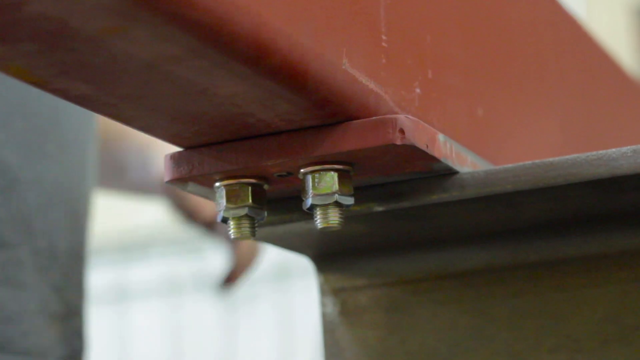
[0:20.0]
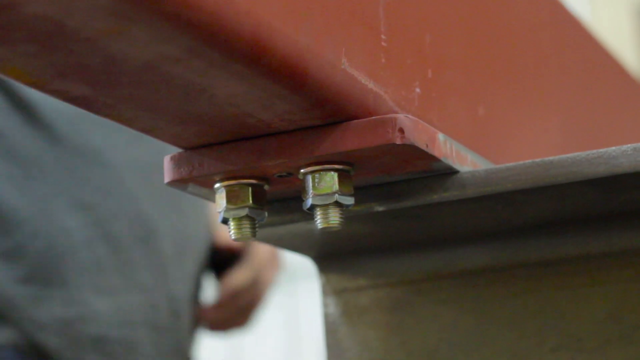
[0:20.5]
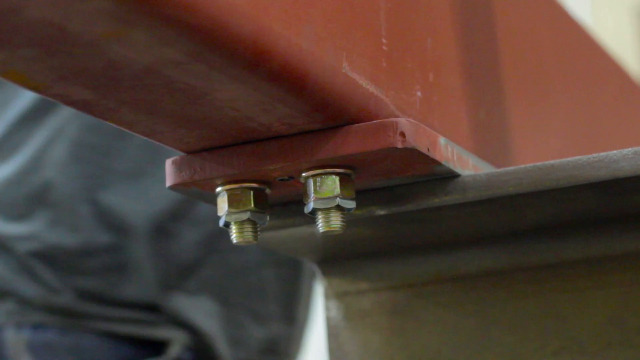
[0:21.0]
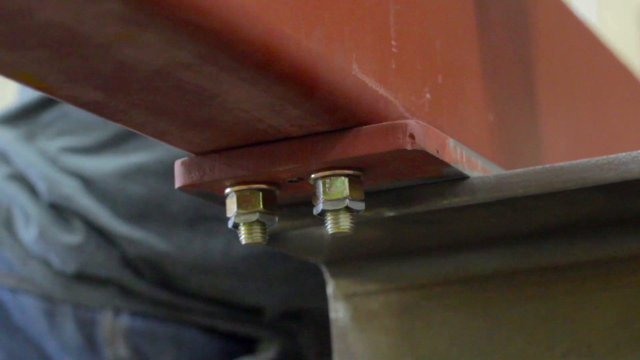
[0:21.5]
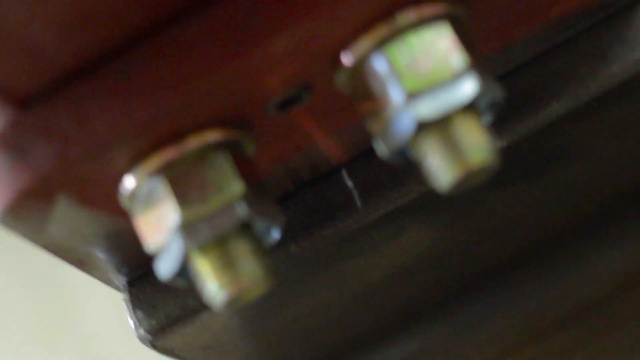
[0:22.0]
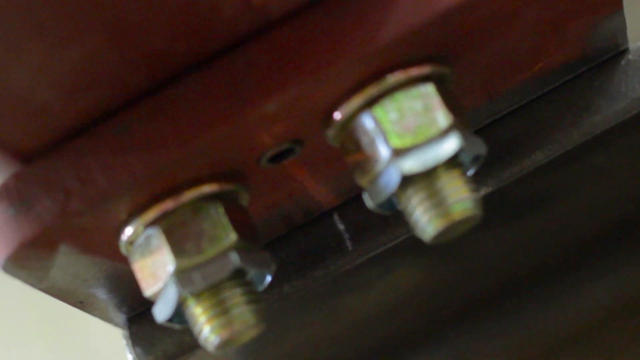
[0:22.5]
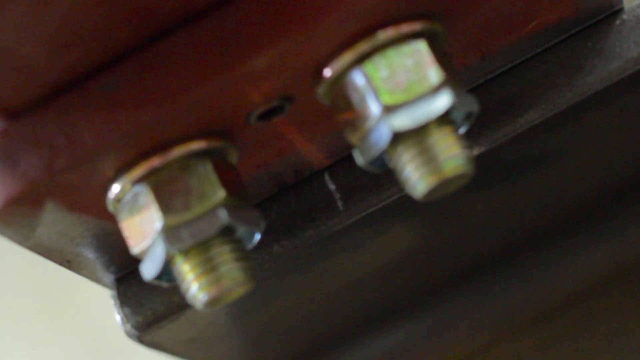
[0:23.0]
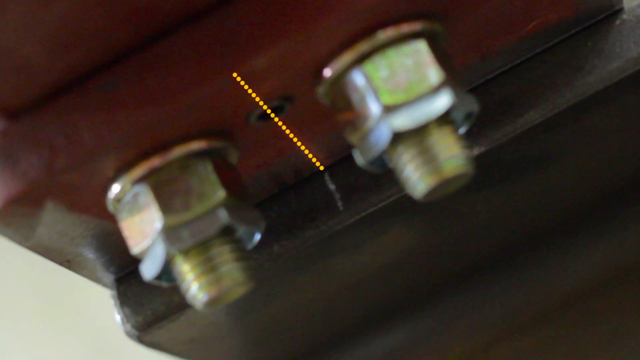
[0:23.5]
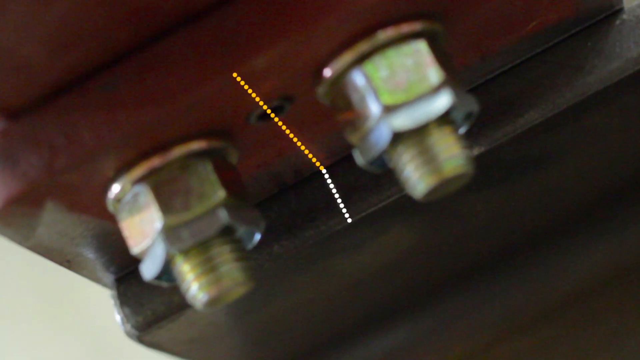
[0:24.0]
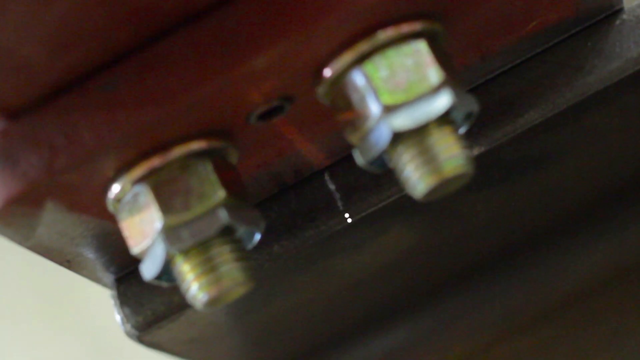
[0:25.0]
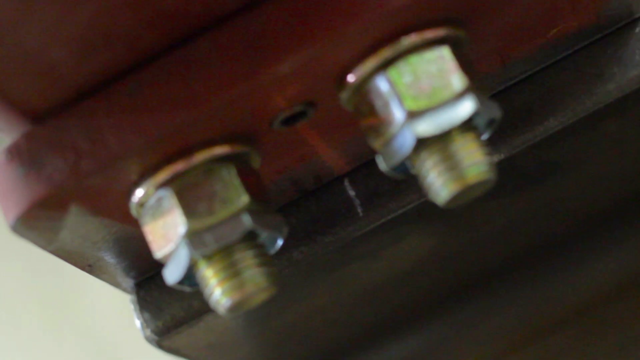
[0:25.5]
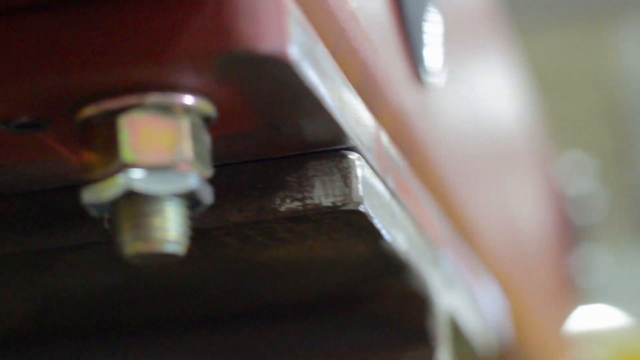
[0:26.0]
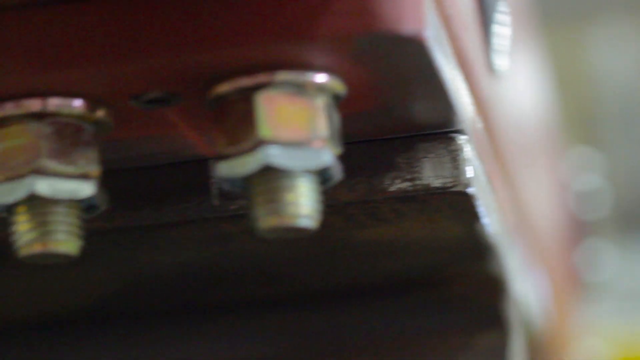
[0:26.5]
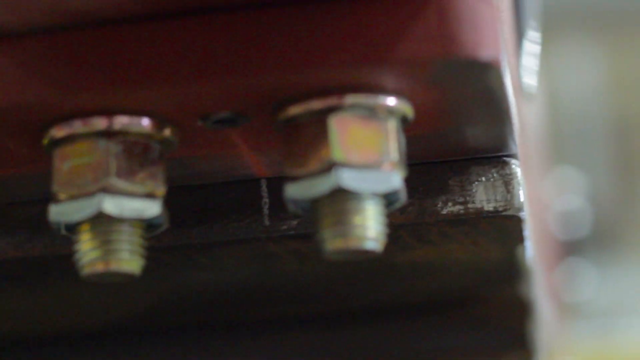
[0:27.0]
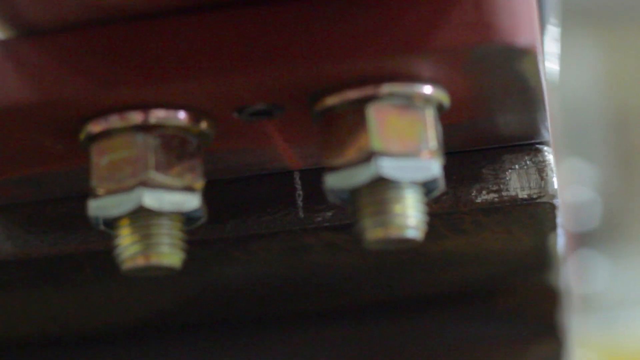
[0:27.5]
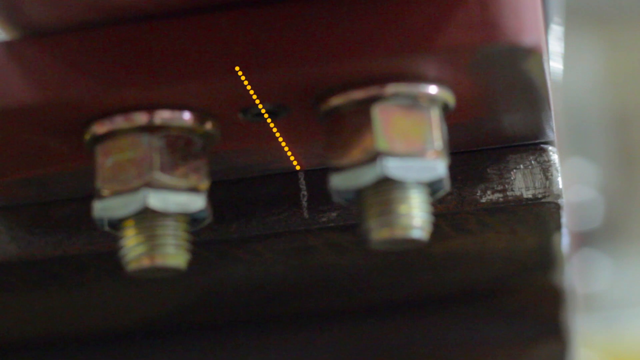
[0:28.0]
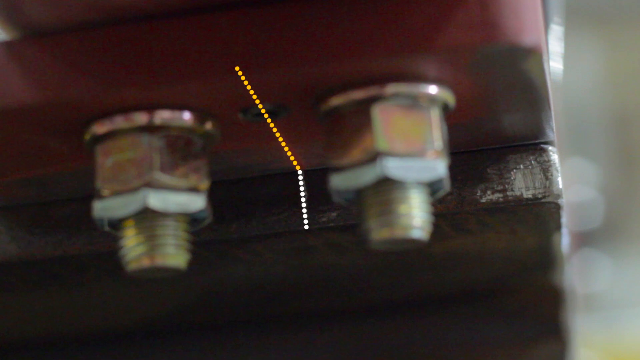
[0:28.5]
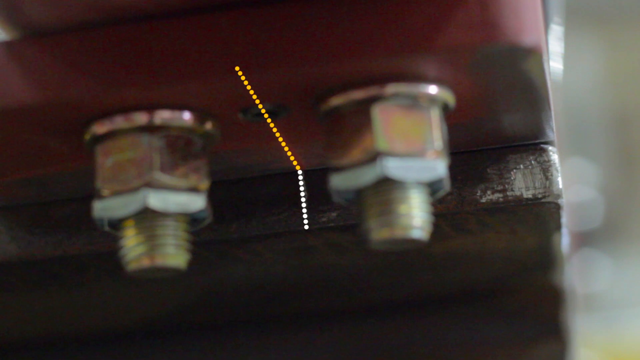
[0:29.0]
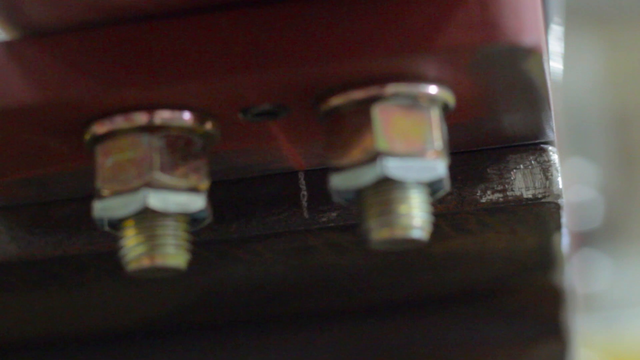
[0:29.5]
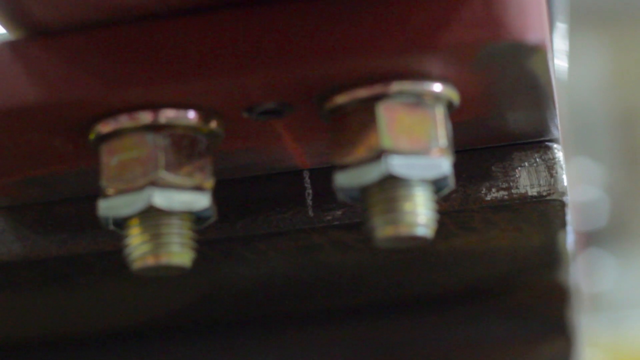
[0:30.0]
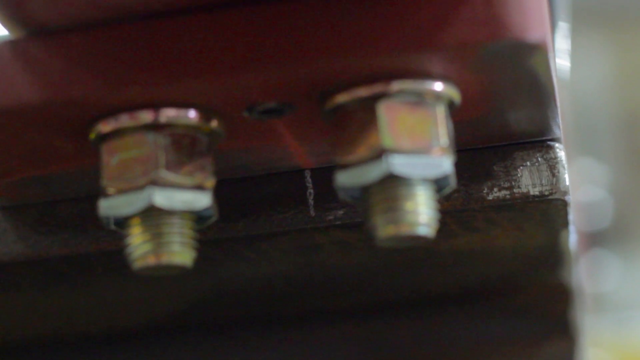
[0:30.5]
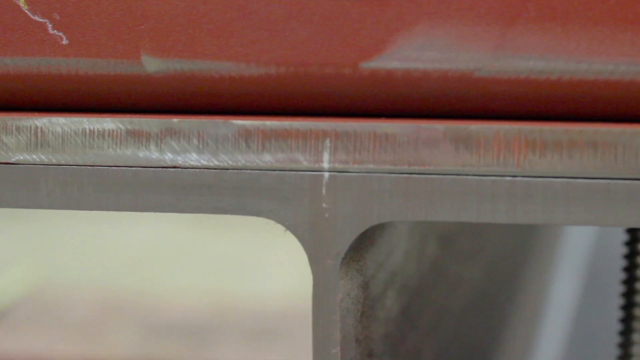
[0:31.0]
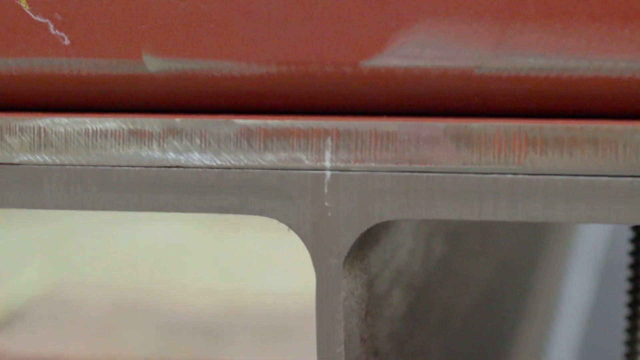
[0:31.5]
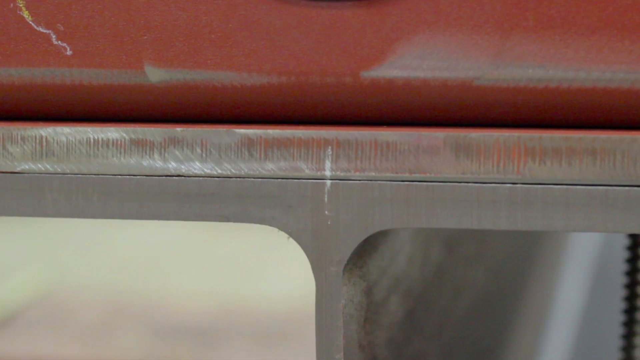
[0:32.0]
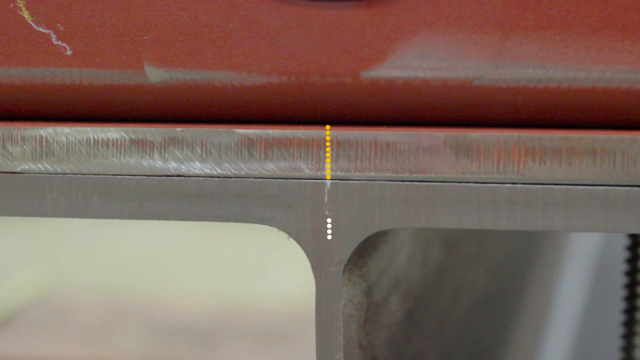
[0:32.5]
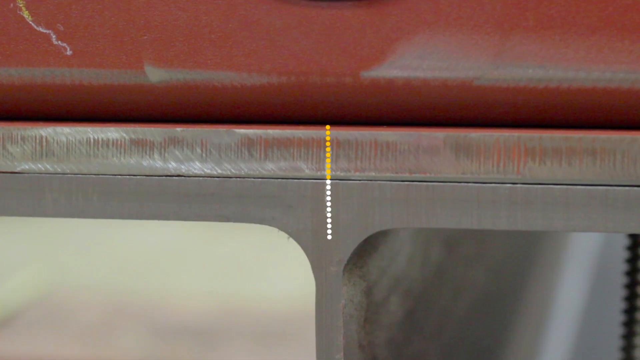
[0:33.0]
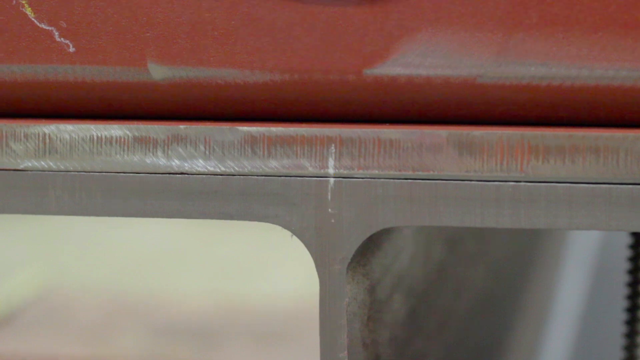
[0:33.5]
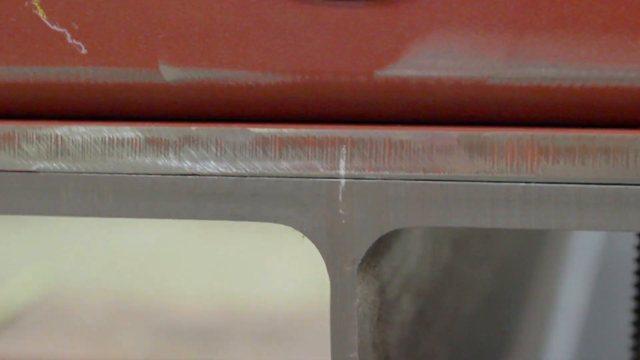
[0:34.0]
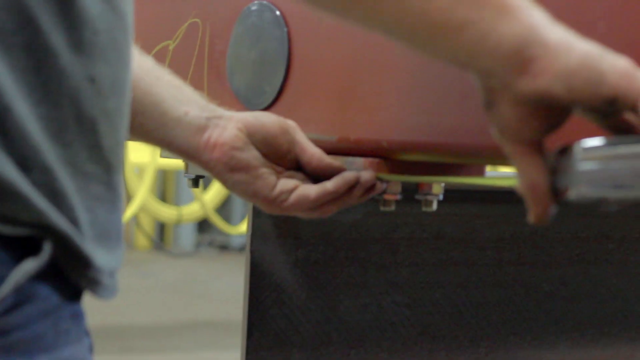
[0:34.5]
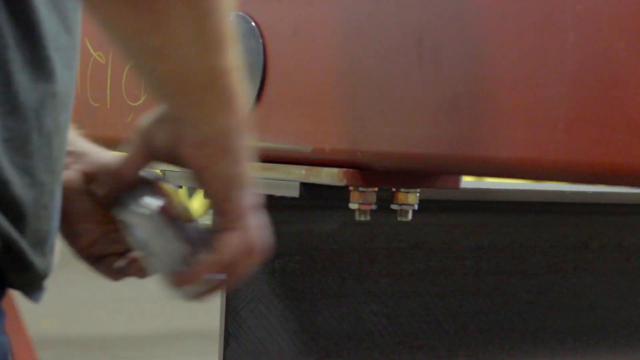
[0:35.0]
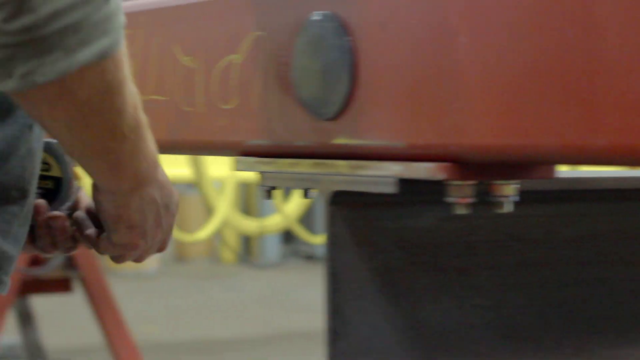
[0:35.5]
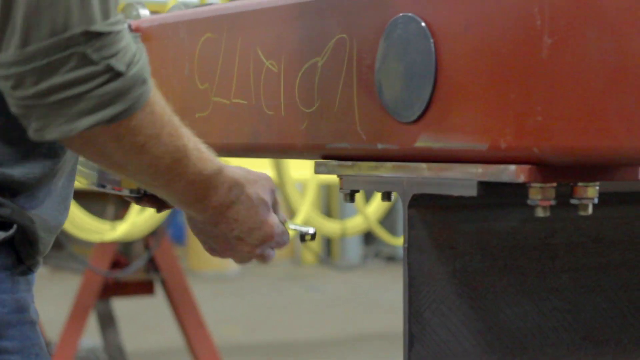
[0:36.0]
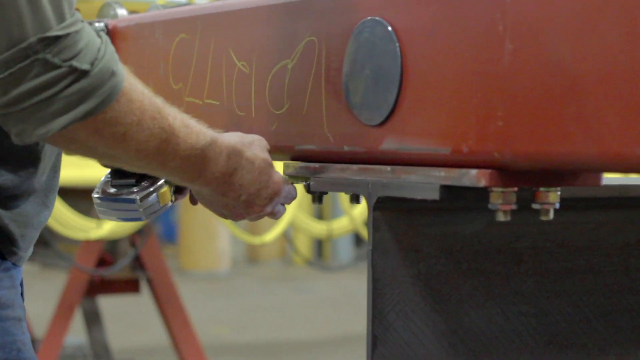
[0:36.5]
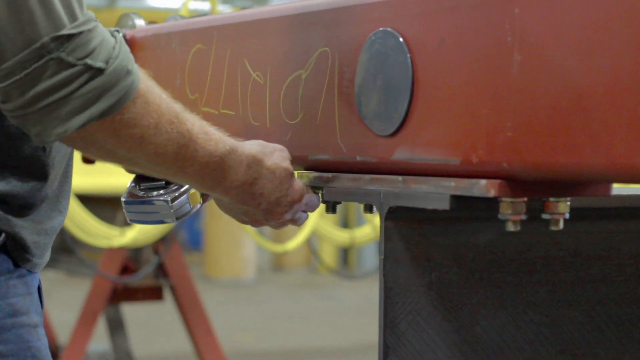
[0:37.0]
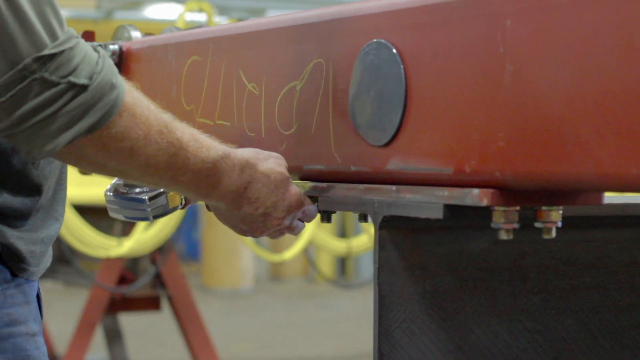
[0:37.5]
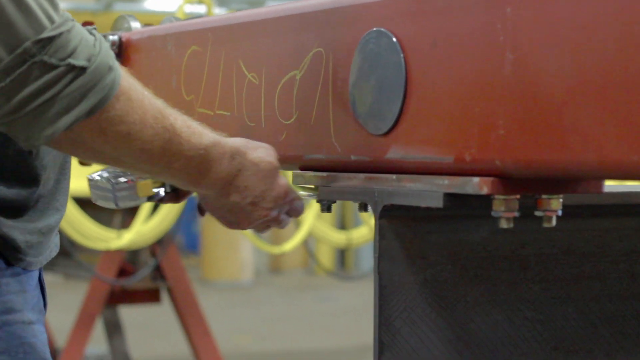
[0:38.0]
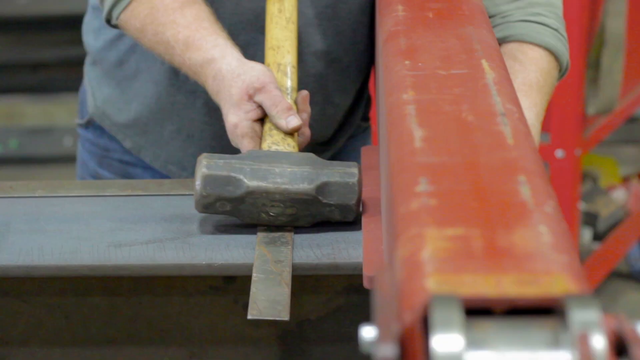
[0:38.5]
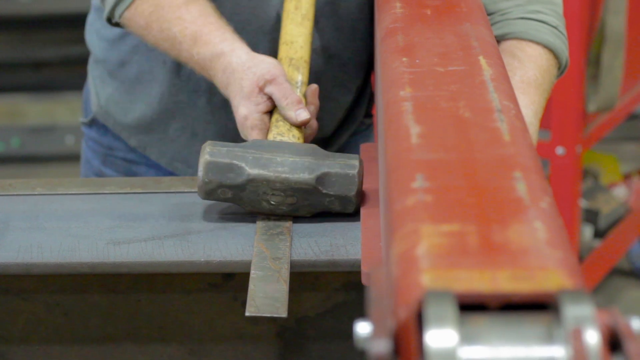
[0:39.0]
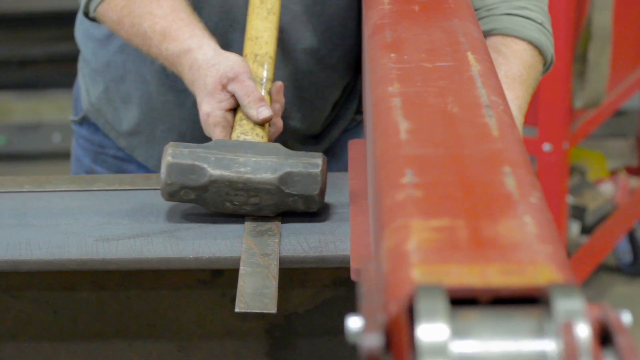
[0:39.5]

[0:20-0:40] The camera is zoomed in on the bolts on the long red bar. A drawing of a yellow line connected to a white line, both dotted, appears between the two bolts being filmed. The camera pans left, showing more bolts connected to the long red bar, with two more dotted lines placed between them; the yellow dotted line points diagonally and the white dotted line is connected below it, facing downwards. The red bar is placed on the grey platform, and there appears to be a yellow dotted line and a white dotted line connected vertically in the middle of the screen. The video transitions to the older man using a tape measure to measure the large red bar. The older man then uses a sledgehammer next to the large red bar; only his arms are filmed as he holds the sledgehammer in his right arm.